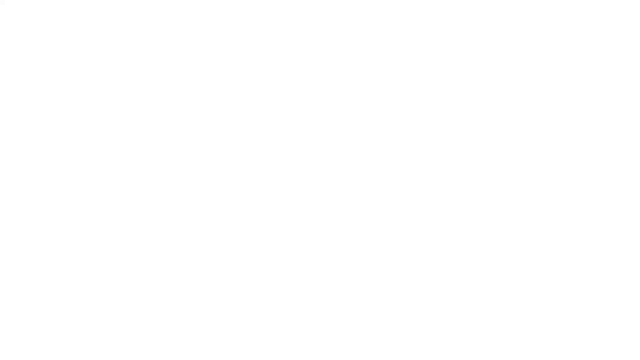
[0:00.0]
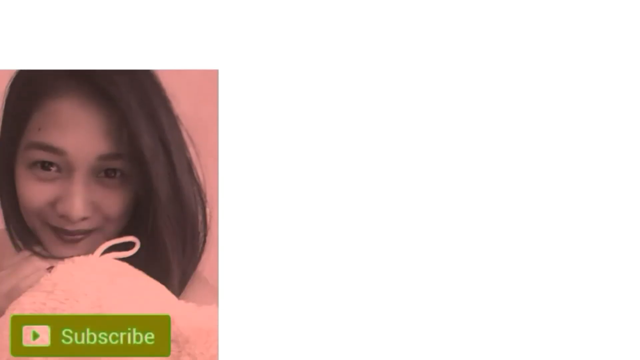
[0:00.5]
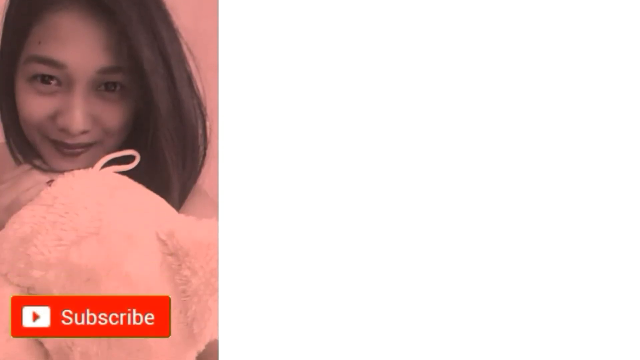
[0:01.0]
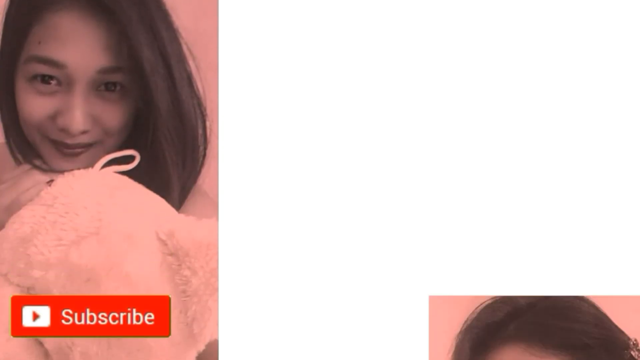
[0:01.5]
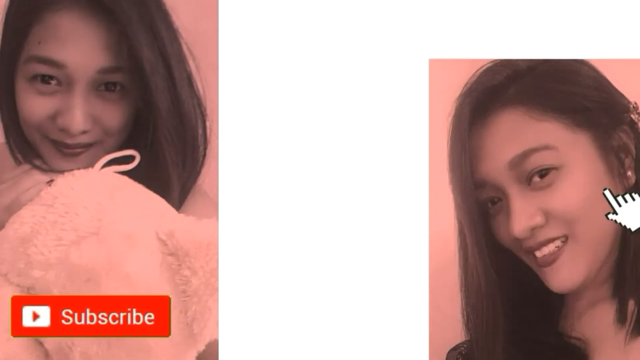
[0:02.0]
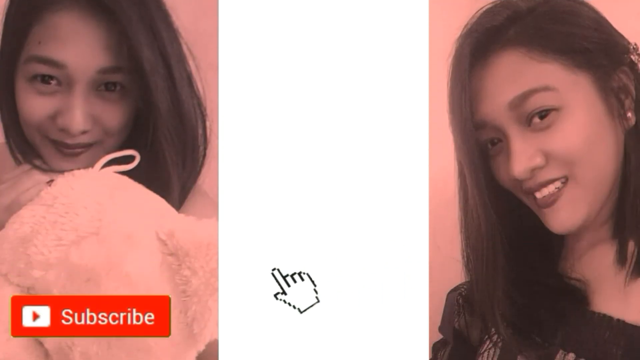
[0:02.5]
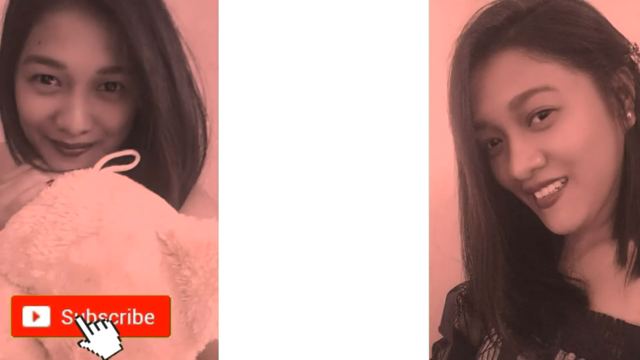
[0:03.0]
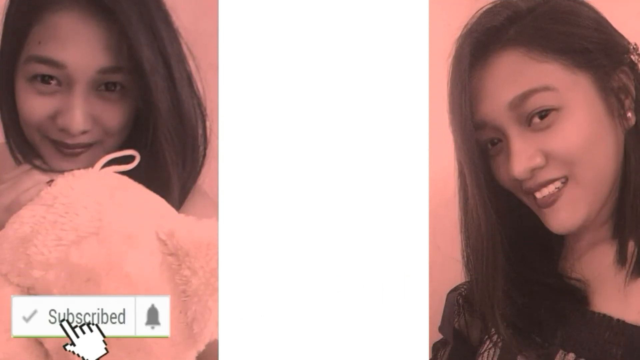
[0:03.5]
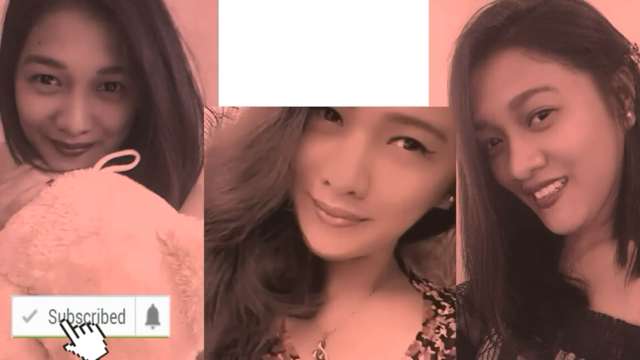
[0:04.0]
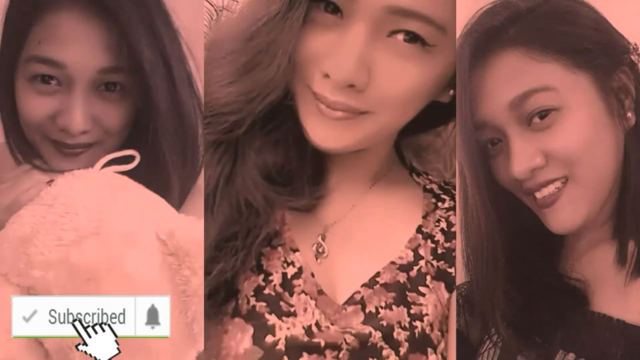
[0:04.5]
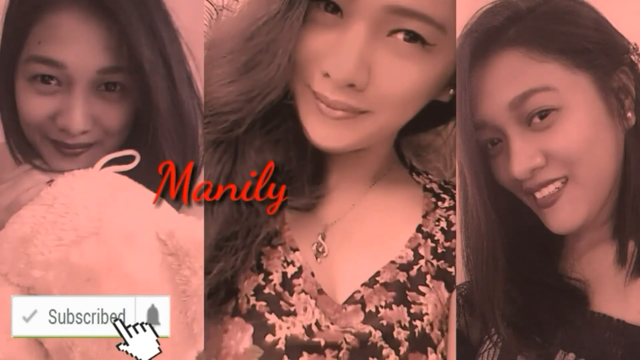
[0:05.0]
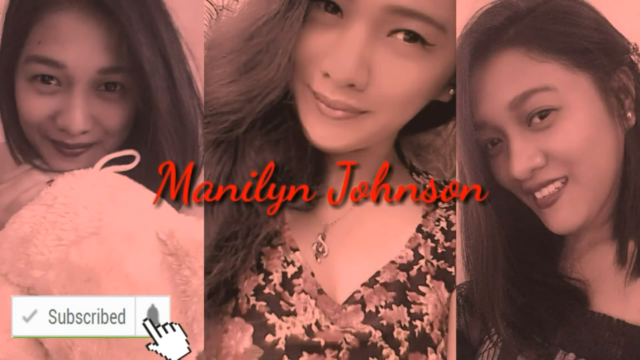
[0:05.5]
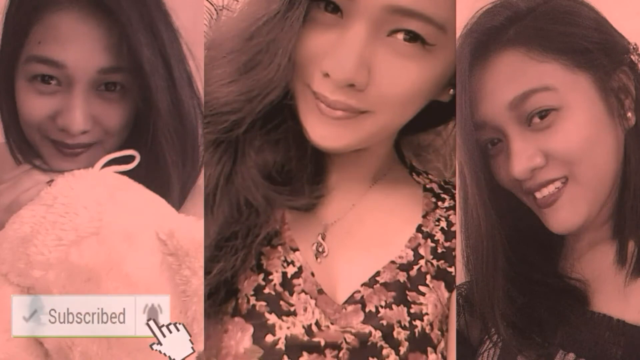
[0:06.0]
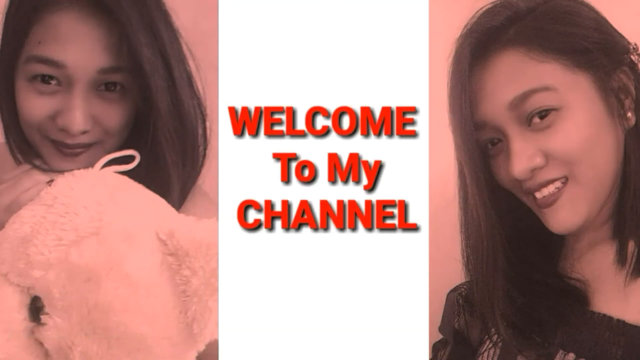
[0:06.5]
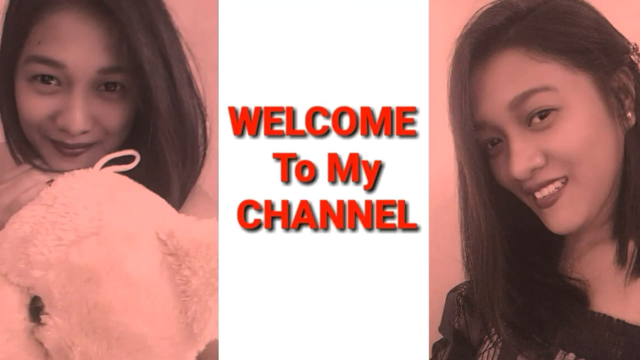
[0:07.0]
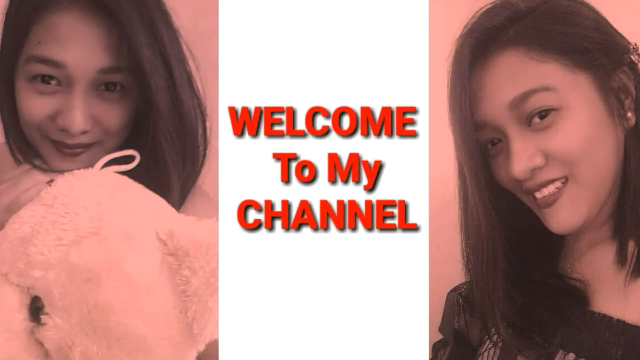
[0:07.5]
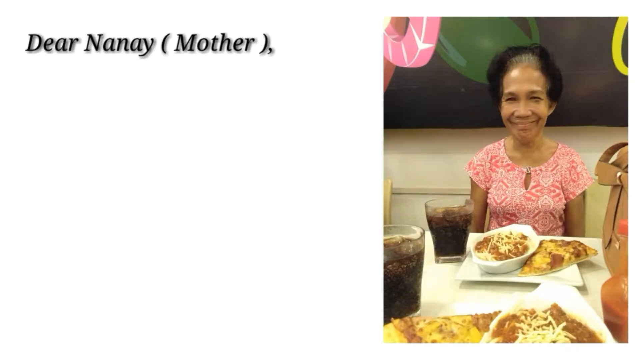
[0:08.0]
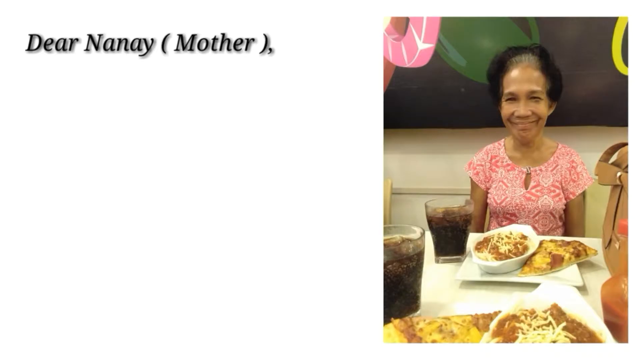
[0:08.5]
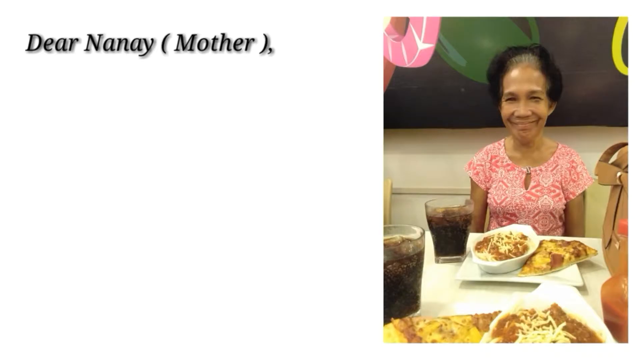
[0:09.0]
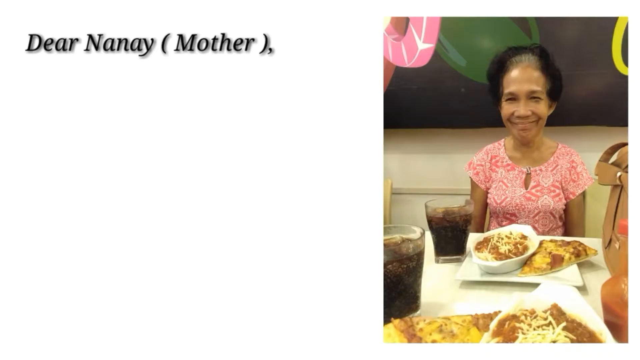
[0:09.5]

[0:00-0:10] A mother and her child appear together; they seem like very happy people, and the mother looks very happy and appreciated.